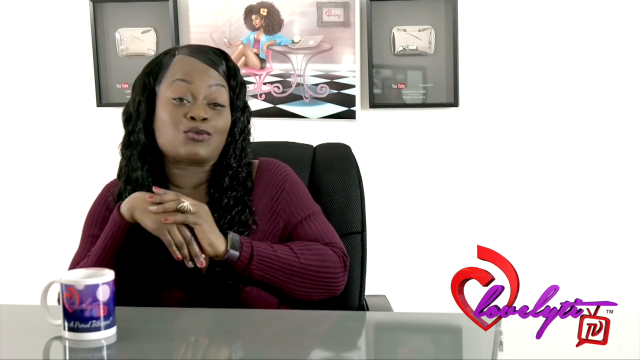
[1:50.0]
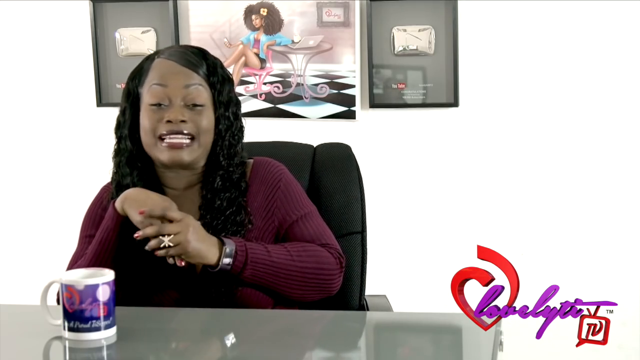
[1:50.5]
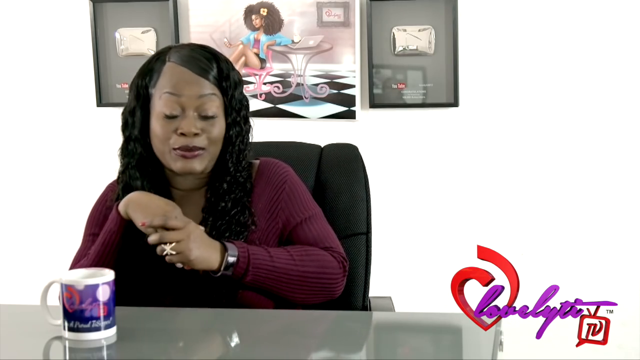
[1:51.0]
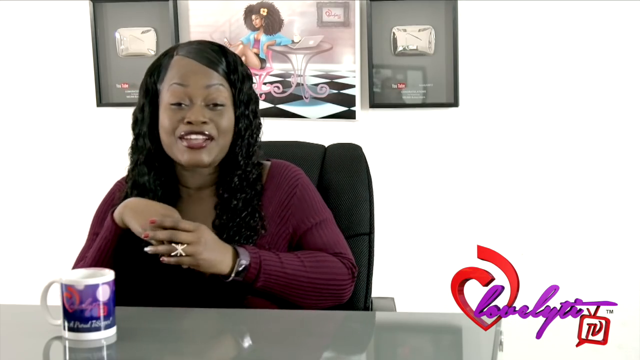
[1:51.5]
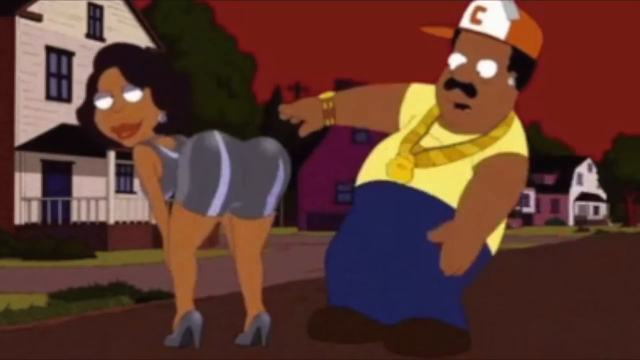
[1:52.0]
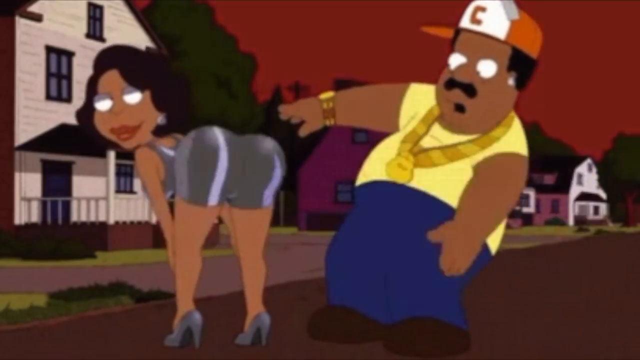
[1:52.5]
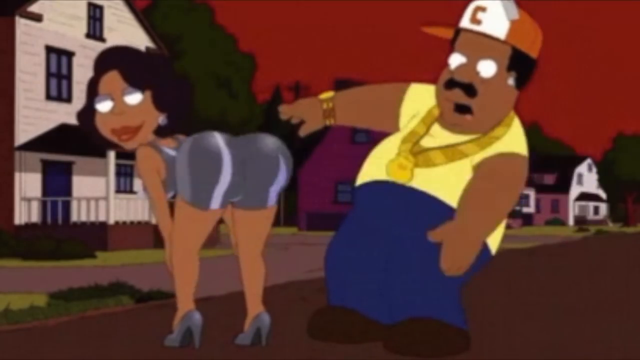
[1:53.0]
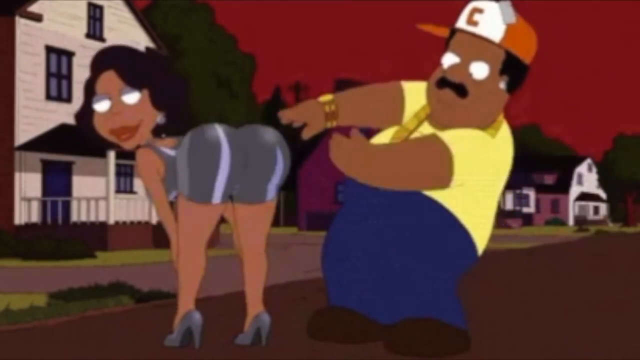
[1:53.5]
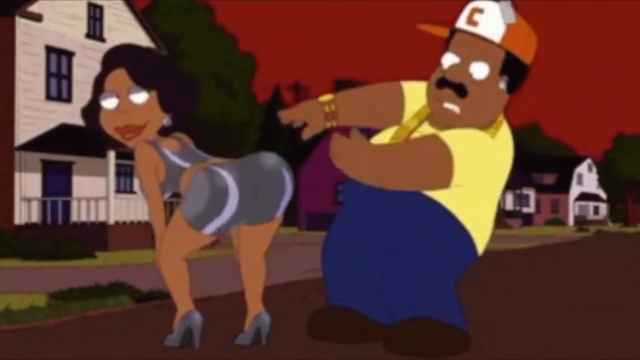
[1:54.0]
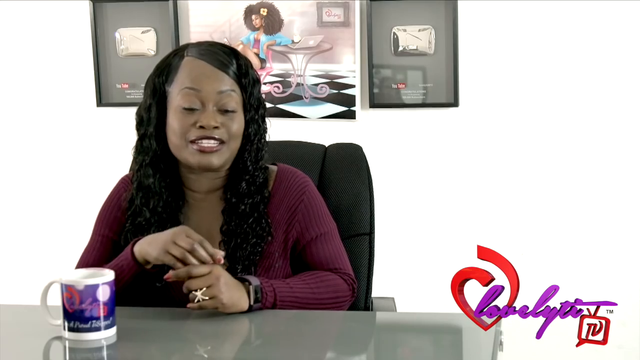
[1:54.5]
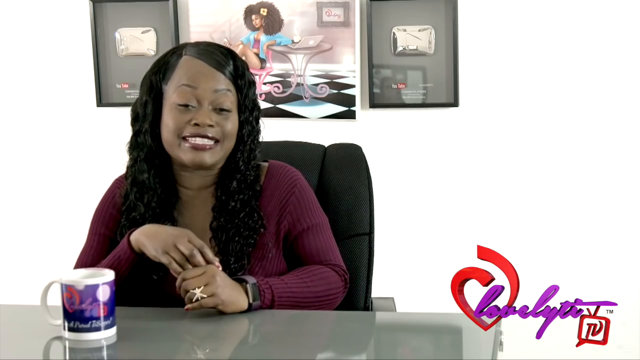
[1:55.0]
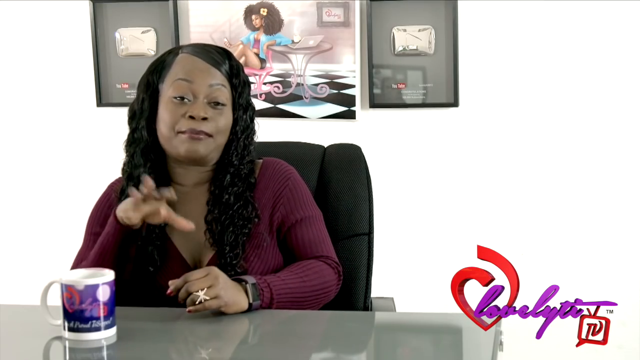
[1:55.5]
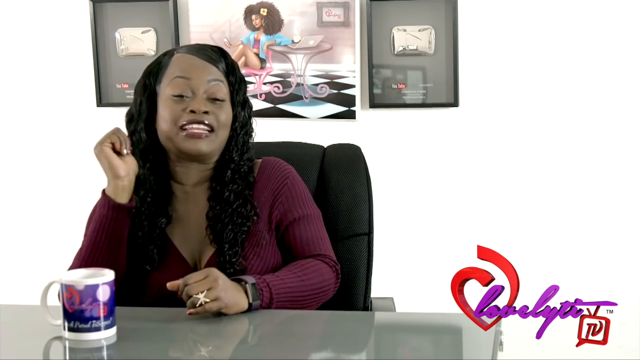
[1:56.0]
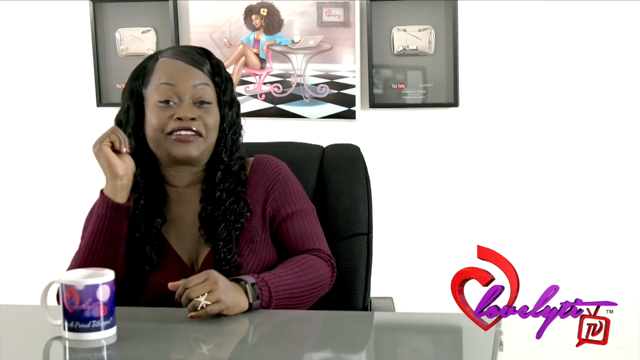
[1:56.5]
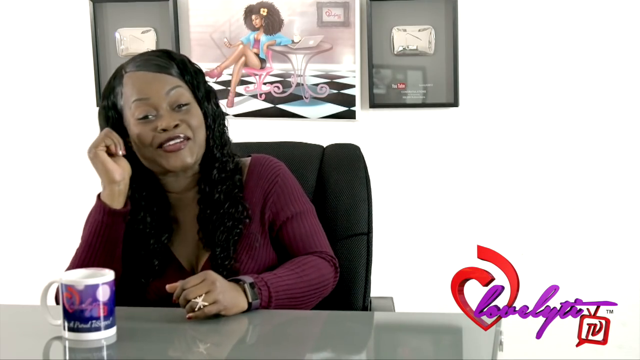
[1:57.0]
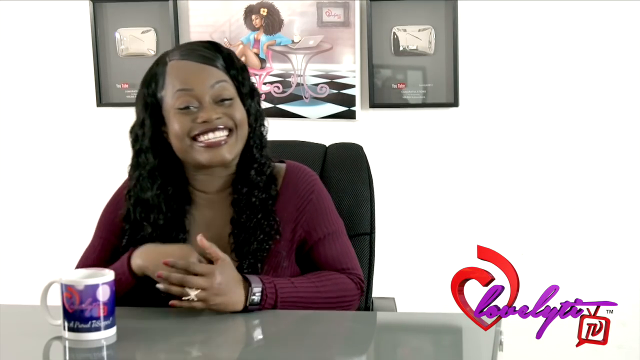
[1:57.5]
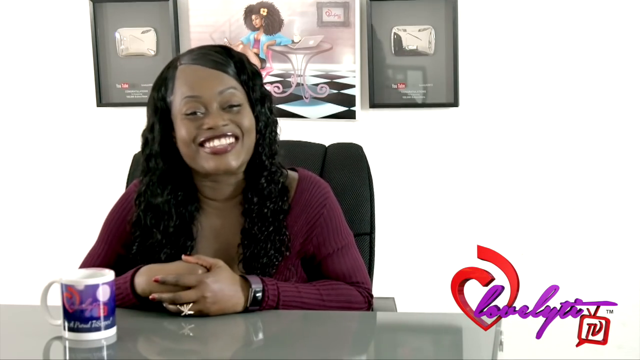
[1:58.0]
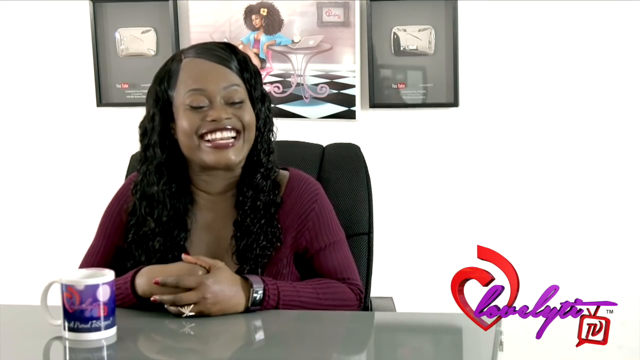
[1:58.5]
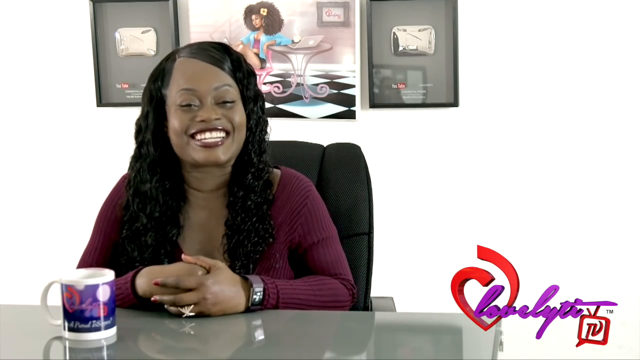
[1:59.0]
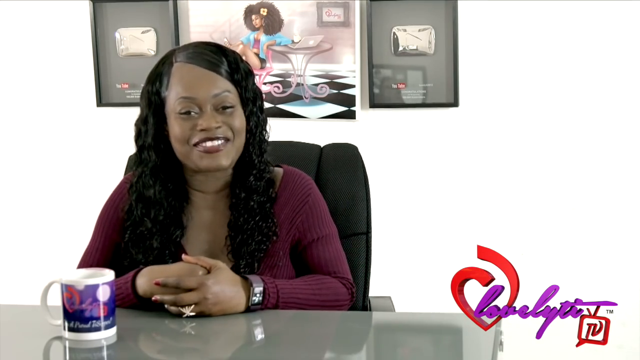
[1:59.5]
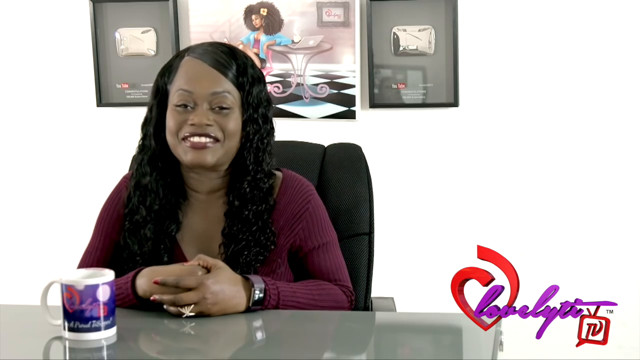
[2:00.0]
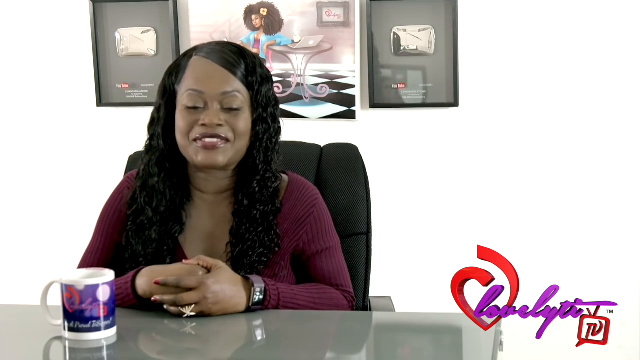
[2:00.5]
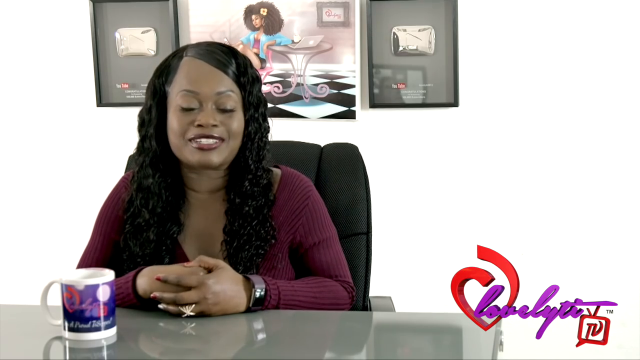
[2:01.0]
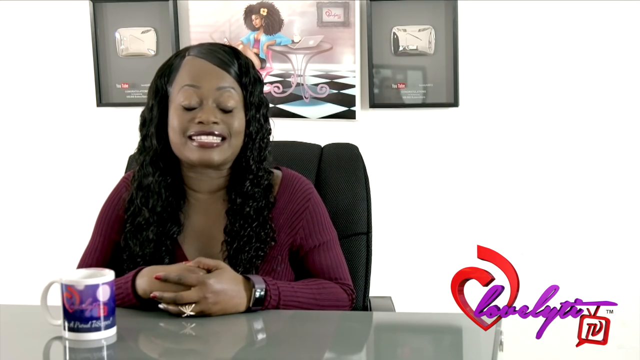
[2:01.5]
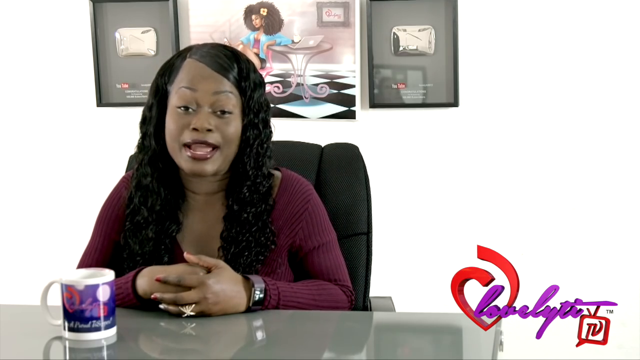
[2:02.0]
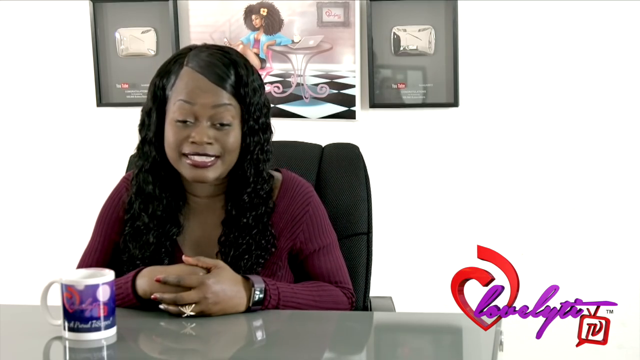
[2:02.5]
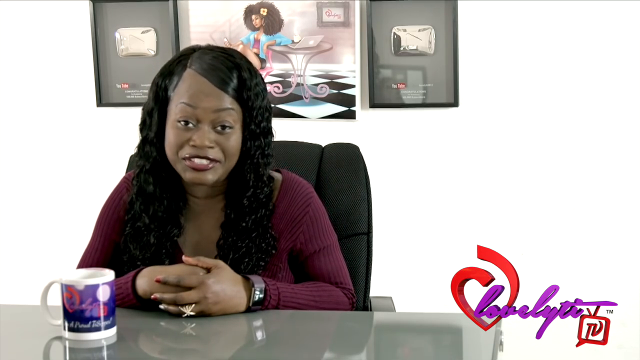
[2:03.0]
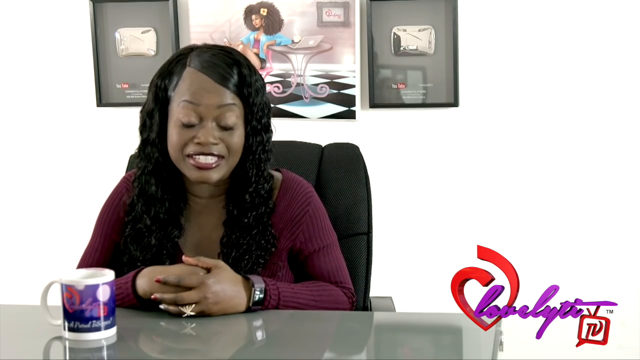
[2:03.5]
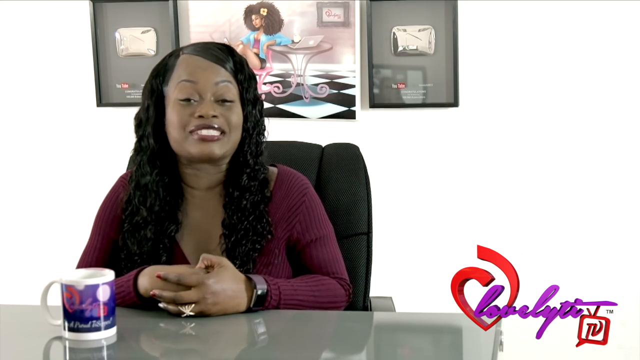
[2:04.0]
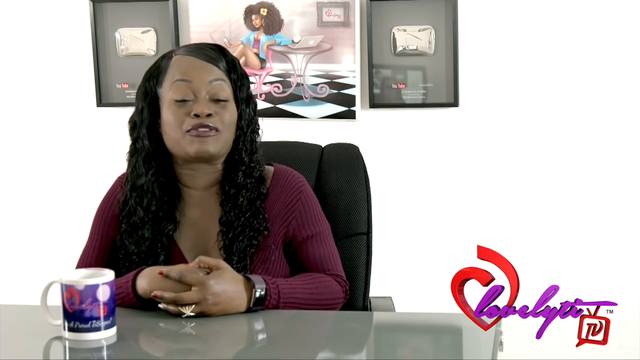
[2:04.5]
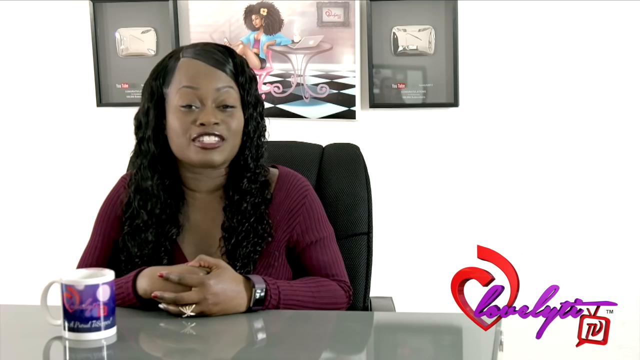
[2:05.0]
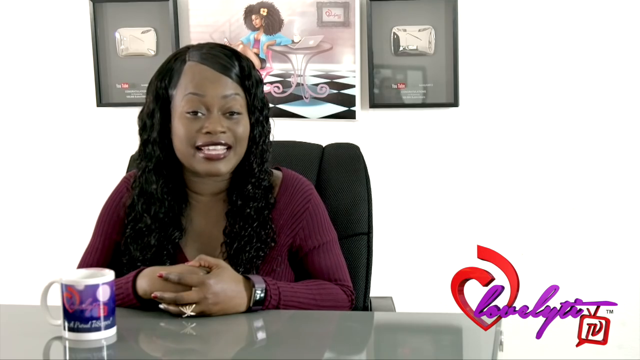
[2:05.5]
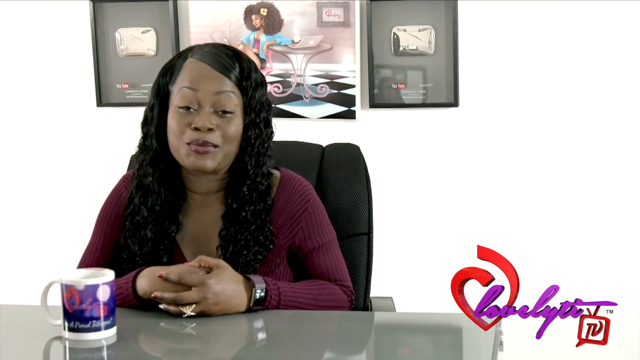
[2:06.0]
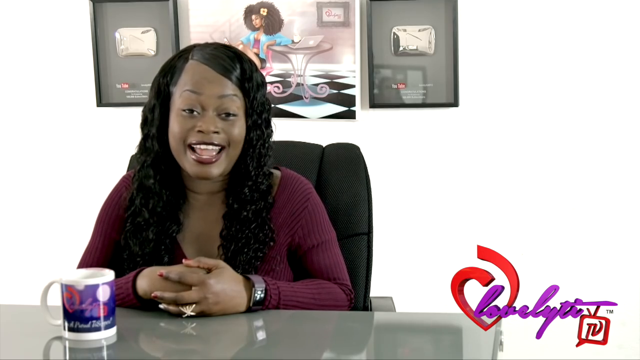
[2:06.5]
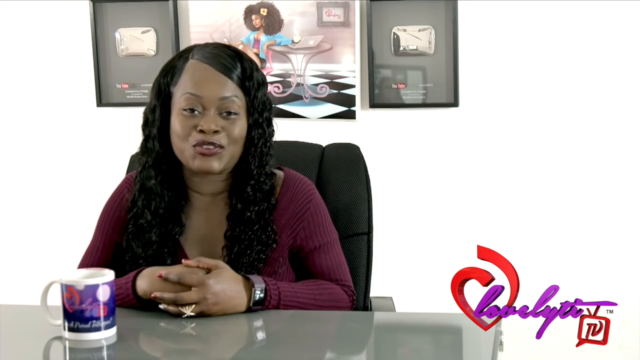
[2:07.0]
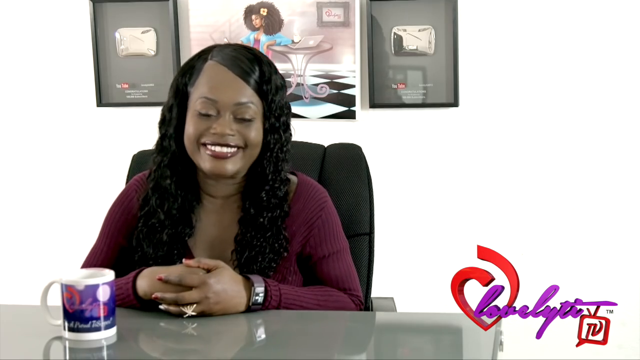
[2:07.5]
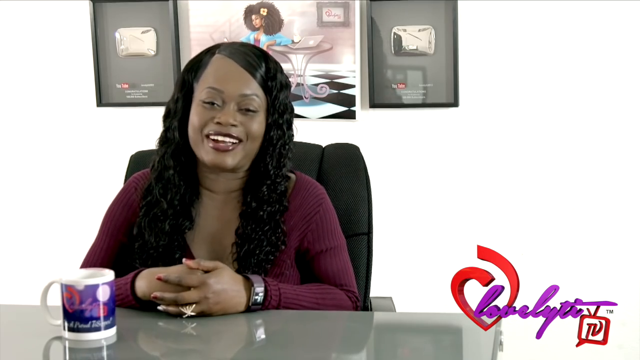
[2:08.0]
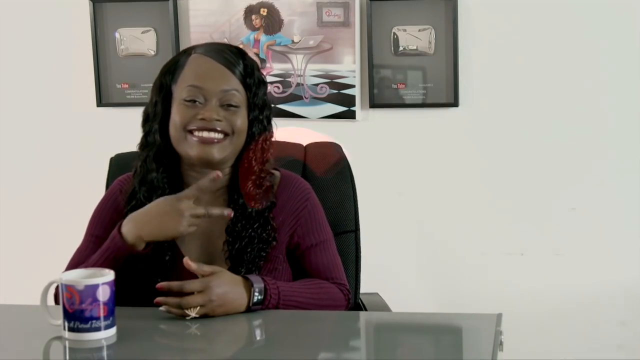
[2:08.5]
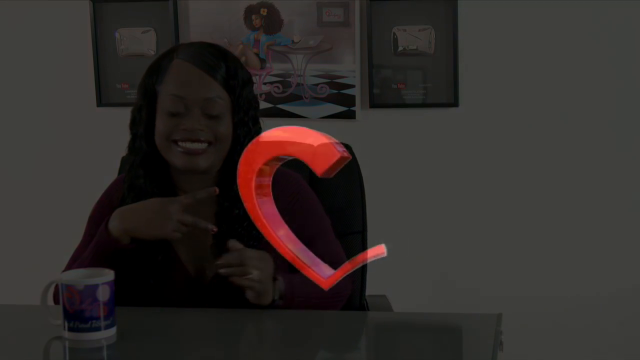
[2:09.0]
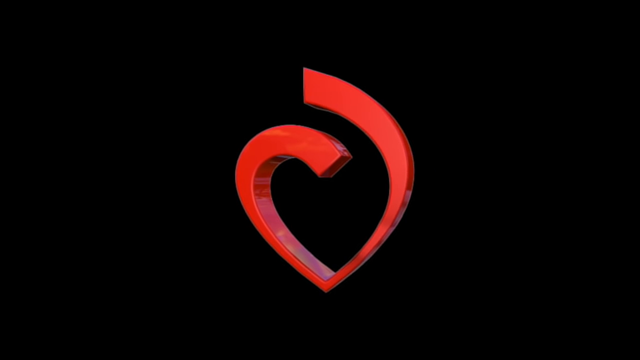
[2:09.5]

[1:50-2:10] The YouTube content creator has her lips pursed. Both elbows are bent: her right elbow is on the desk in front of her, while her left elbow and forearm are raised slightly above the desk. Her right hand is palm down, and her left hand rests diagonally over the top of it. She wears a ring on the forefinger of her left hand. Images from a cartoon follow, showing a cartoon lady and a cartoon man. The lady is bent over, twerking with her palms on her bent knees, while the man moves his hands as if gesturing that he is spanking her posterior as she shakes it. The video returns to the content creator, who smiles and looks into the camera, places both hands on the desk with her fingers interlaced as she speaks, and gives a sideways peace sign with her left hand.